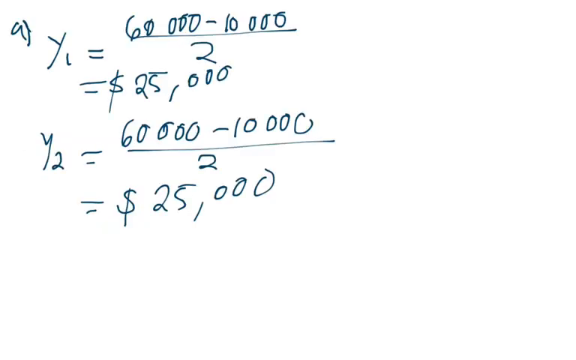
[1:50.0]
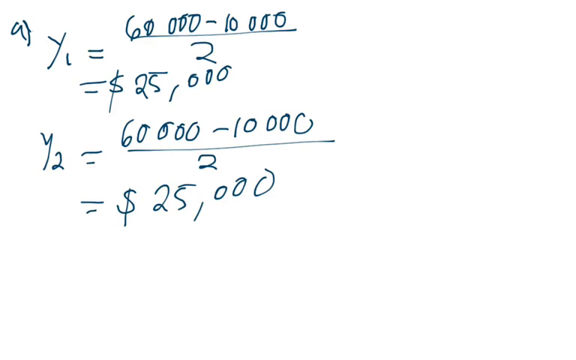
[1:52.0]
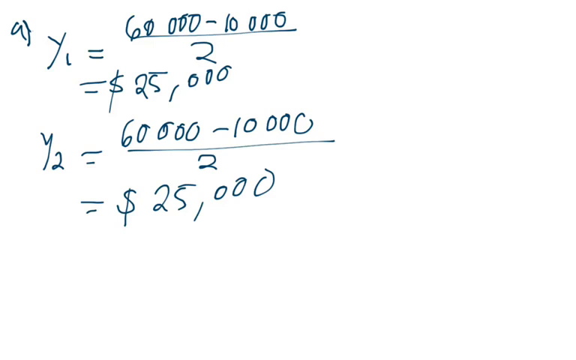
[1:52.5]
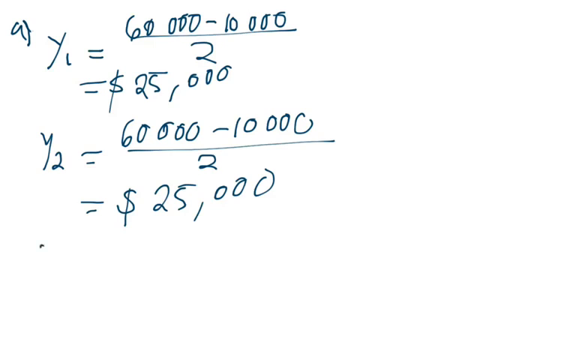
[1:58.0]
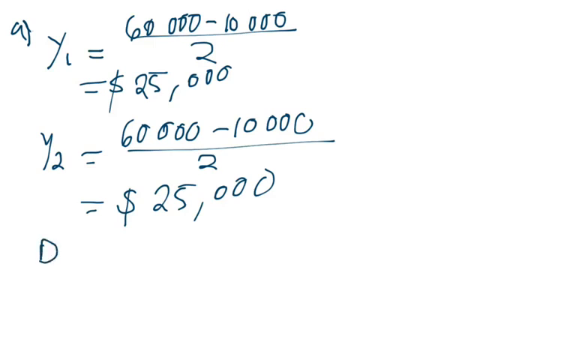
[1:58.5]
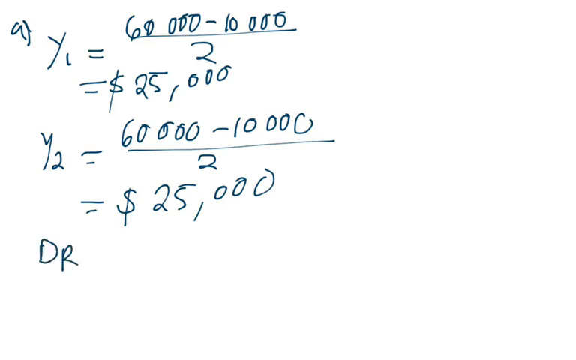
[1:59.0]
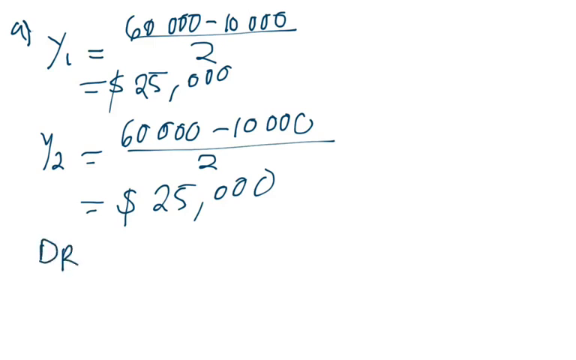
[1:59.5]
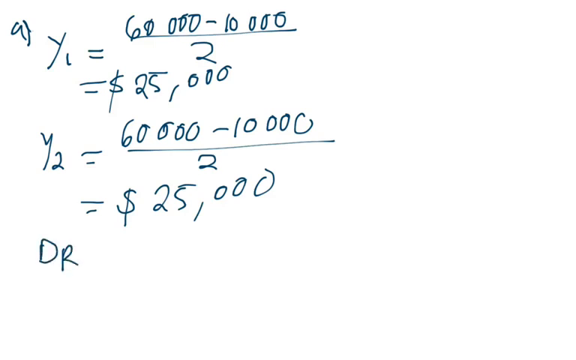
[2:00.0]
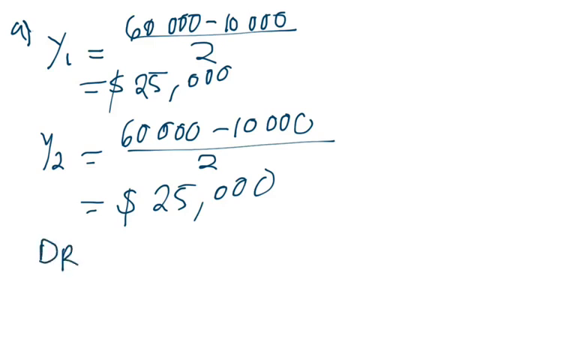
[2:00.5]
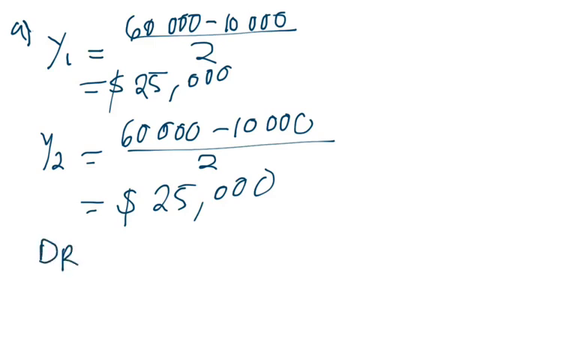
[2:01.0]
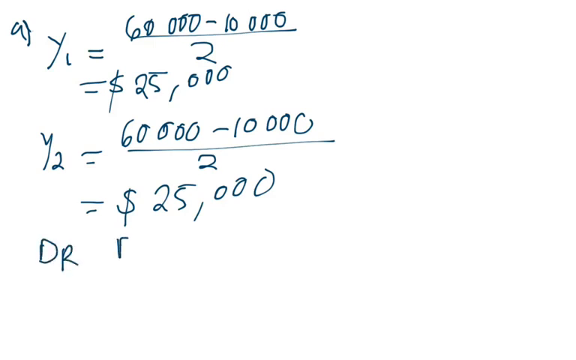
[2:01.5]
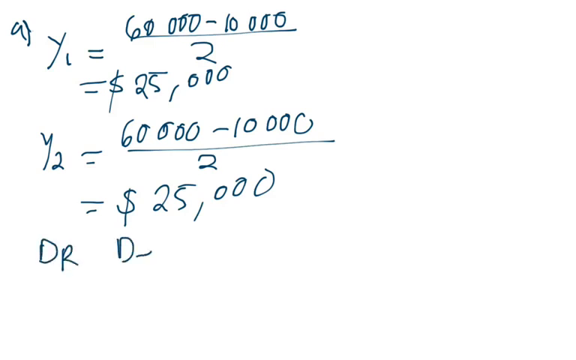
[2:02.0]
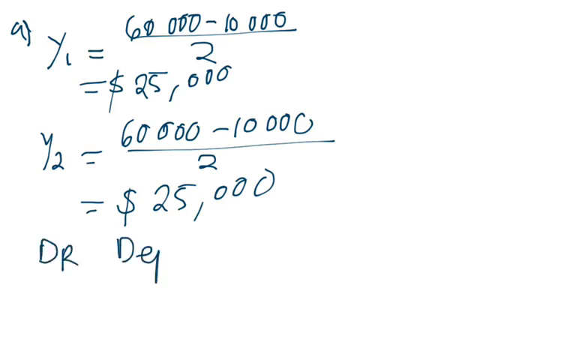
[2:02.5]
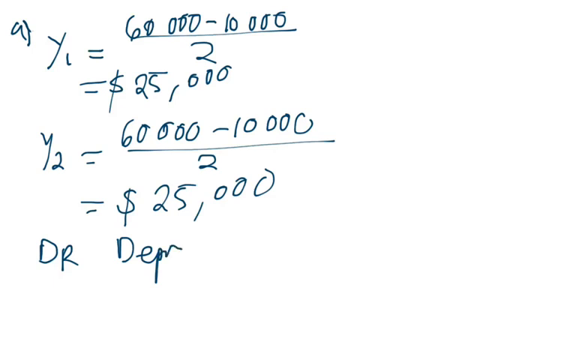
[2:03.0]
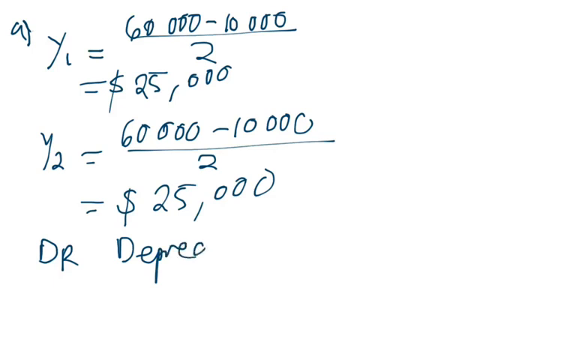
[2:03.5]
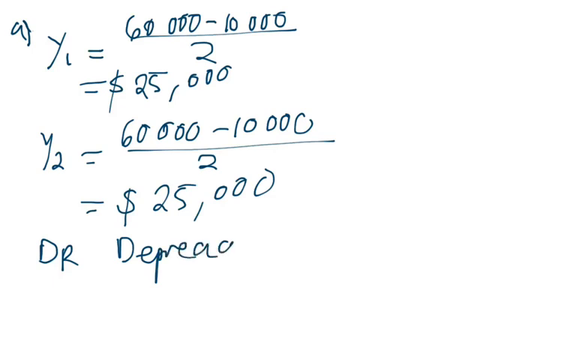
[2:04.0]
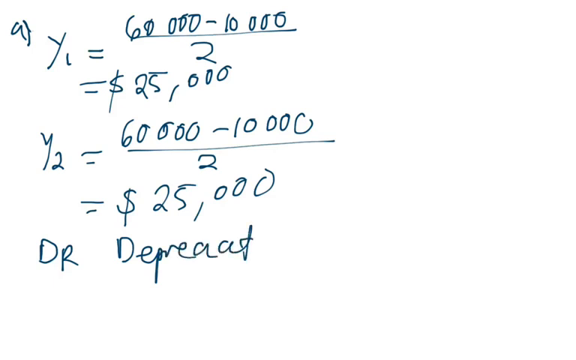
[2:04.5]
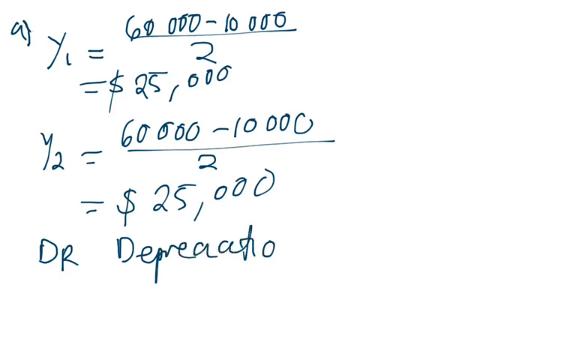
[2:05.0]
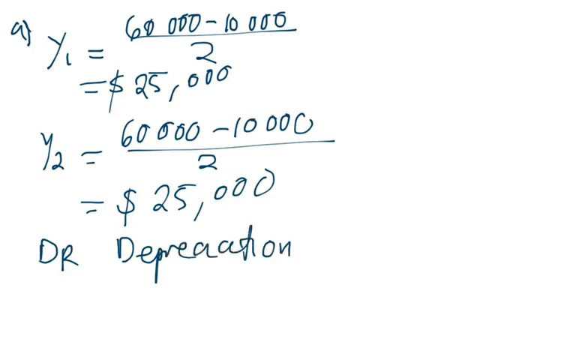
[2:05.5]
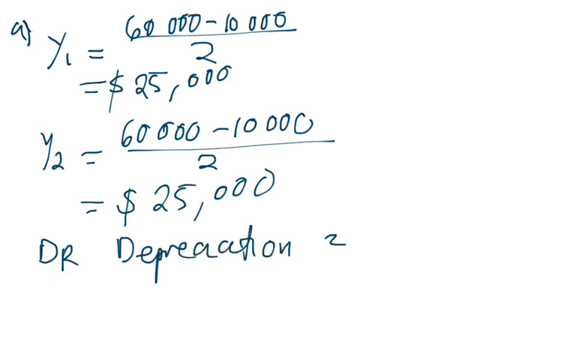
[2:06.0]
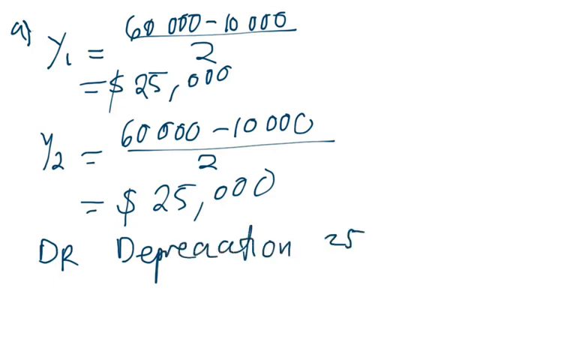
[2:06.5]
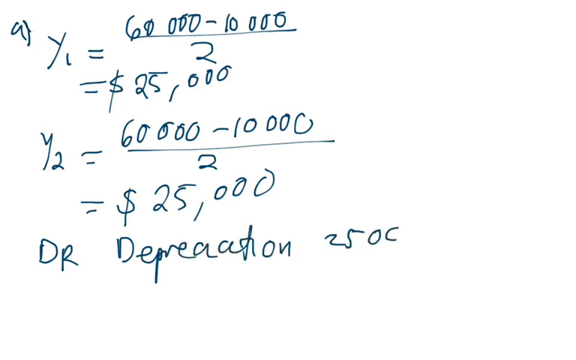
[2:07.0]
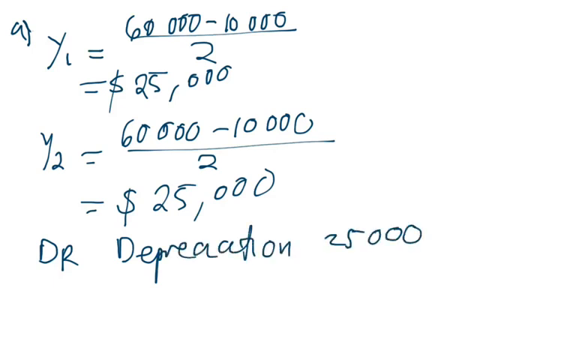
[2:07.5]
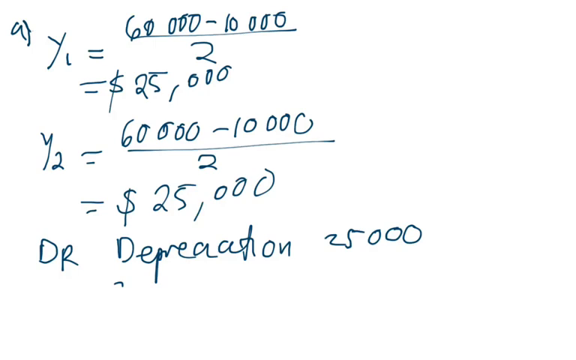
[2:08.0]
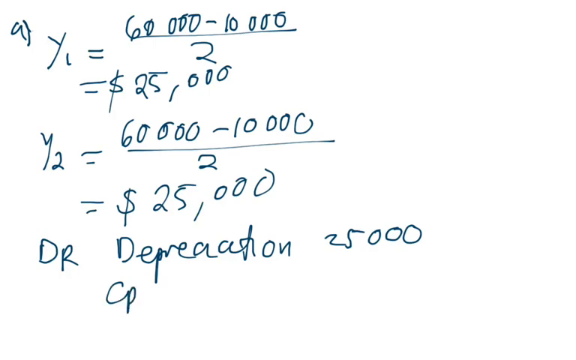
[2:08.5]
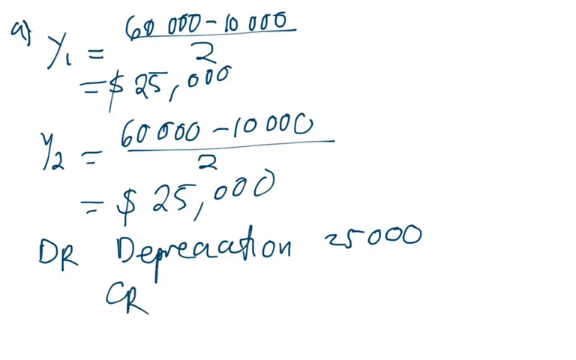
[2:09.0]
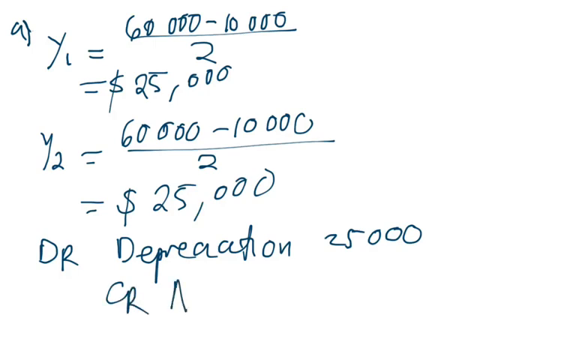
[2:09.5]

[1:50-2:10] Calculations appear on a completely white background: "A) Y1 = 60,000 - 10,000 over 2", below that "= $25,000", below that "Y2 = 60,000 - 10,000 over 2", and below that "= $25,000". All of the calculations are written in blue ink. The 1 and the 2 next to each y appear much smaller than the y. Everything after y1 and y2 is written in slowly. Words then begin to be written below the calculations, sloppily: "DR depreciation 25,000". Nothing else happens on screen. The equations seem to be related to the word problem slide.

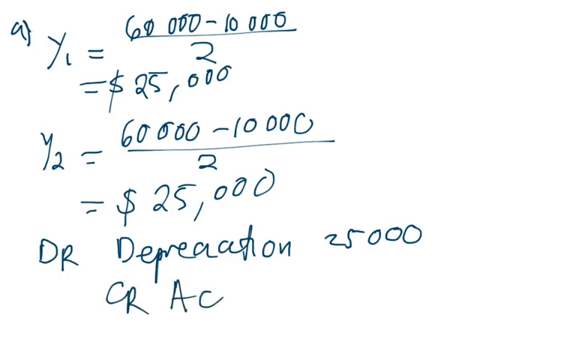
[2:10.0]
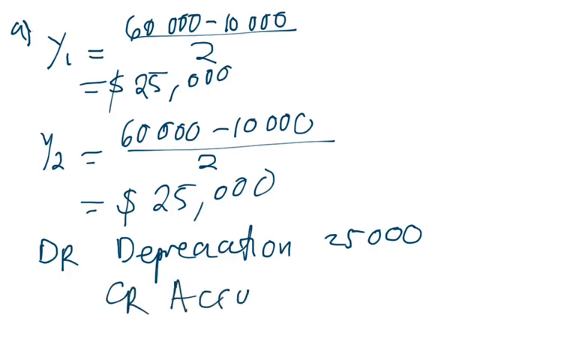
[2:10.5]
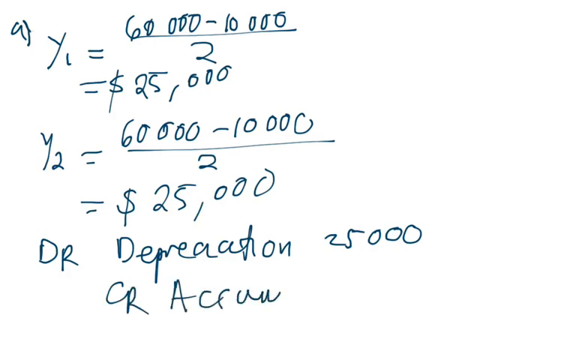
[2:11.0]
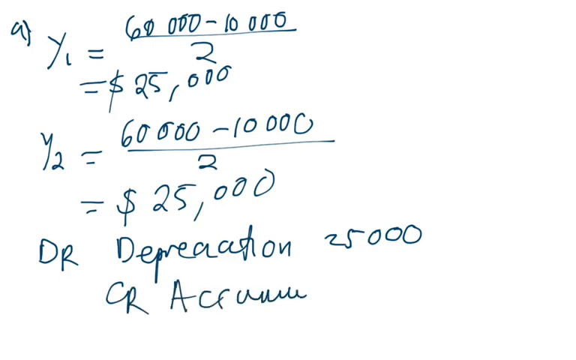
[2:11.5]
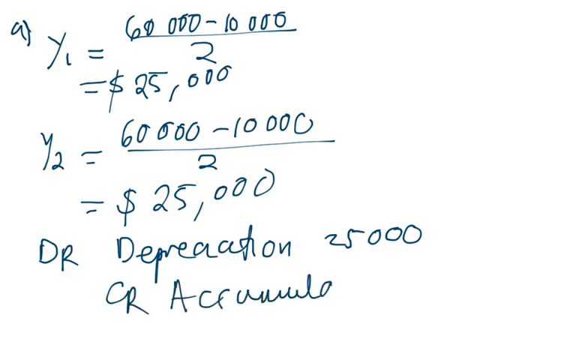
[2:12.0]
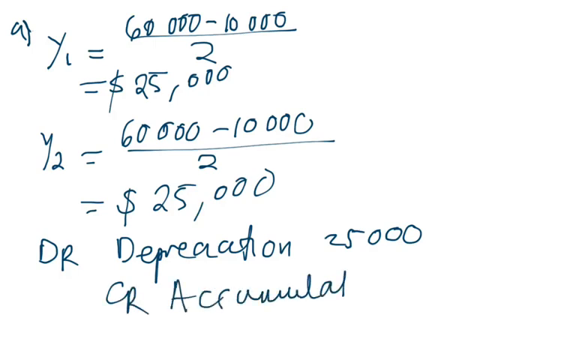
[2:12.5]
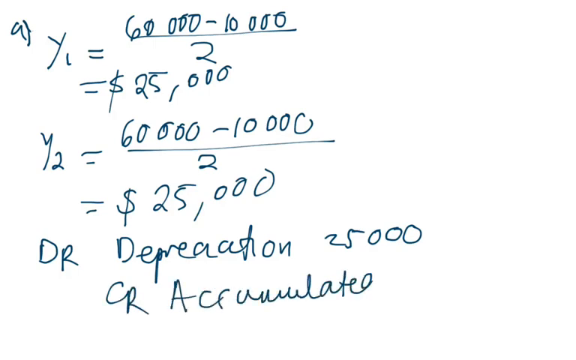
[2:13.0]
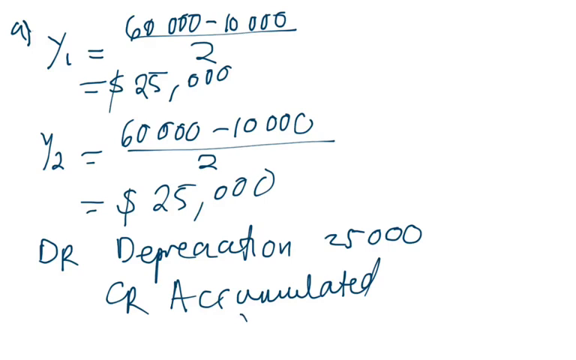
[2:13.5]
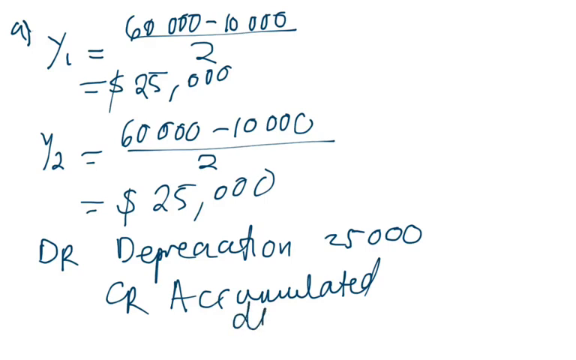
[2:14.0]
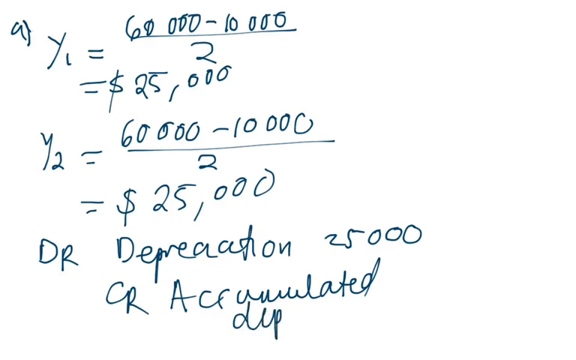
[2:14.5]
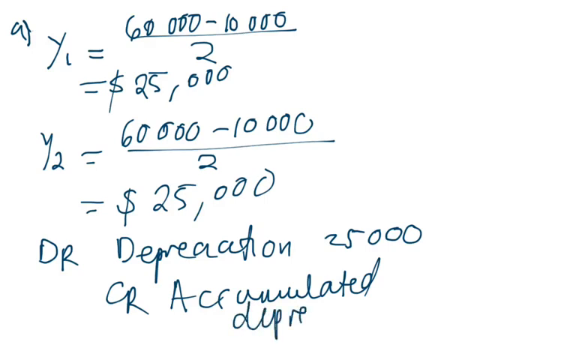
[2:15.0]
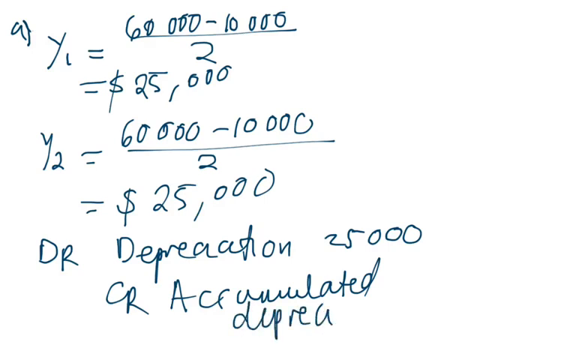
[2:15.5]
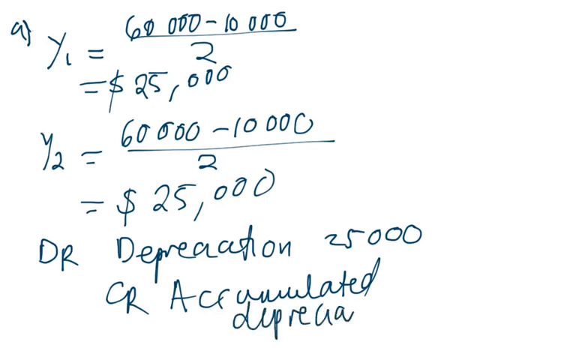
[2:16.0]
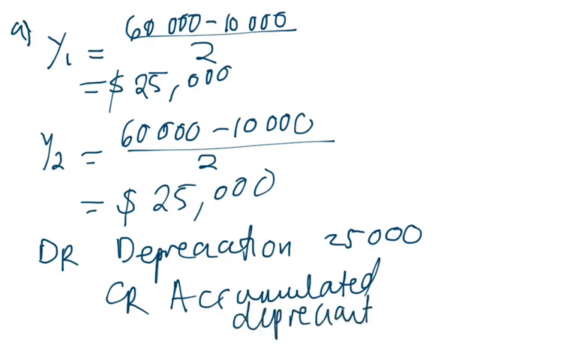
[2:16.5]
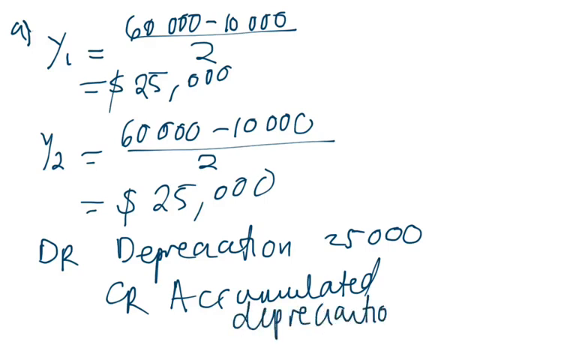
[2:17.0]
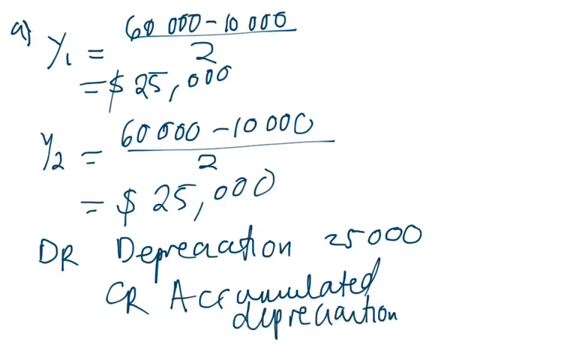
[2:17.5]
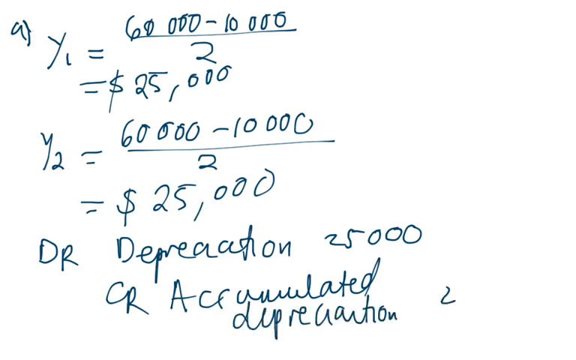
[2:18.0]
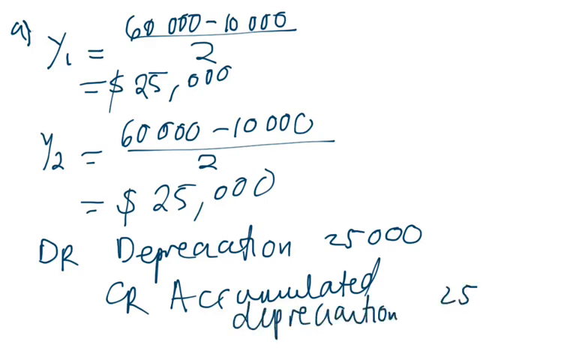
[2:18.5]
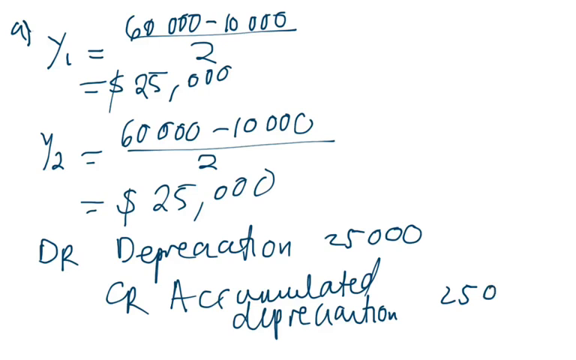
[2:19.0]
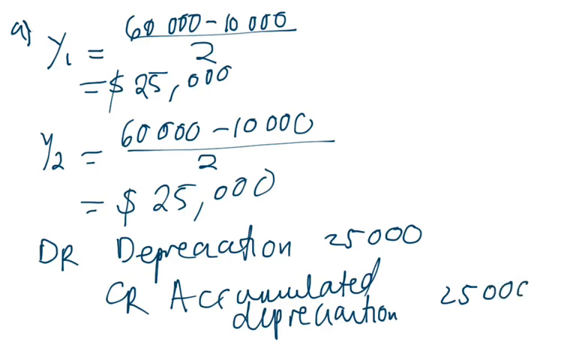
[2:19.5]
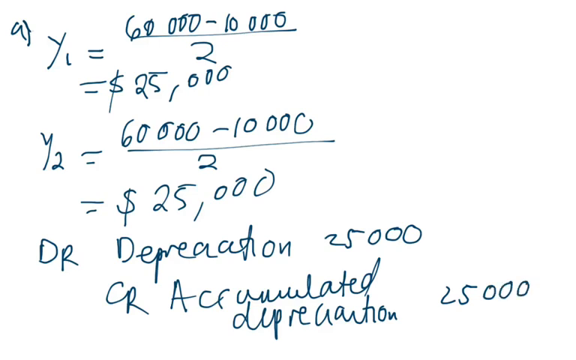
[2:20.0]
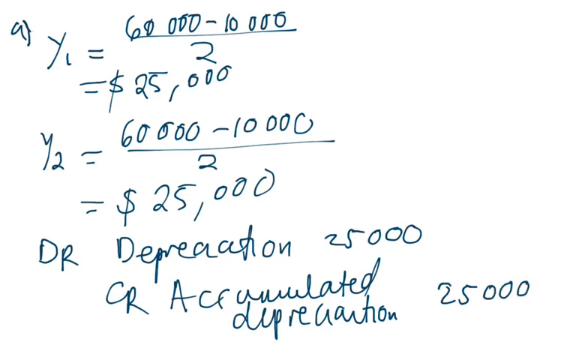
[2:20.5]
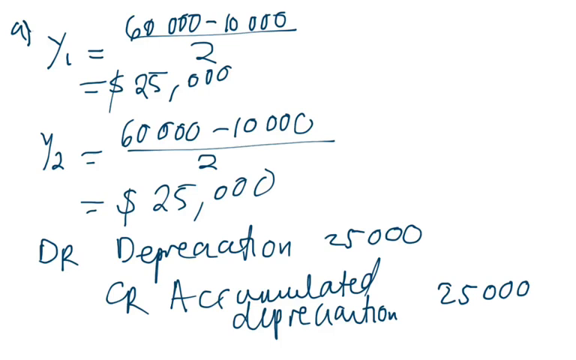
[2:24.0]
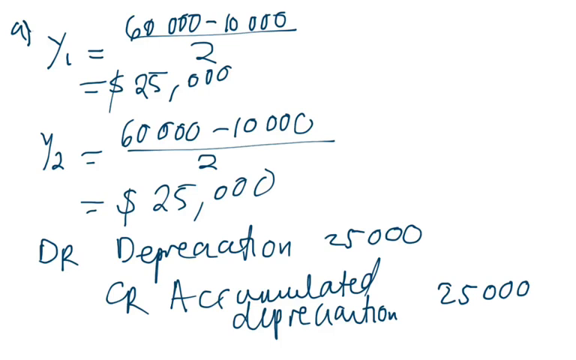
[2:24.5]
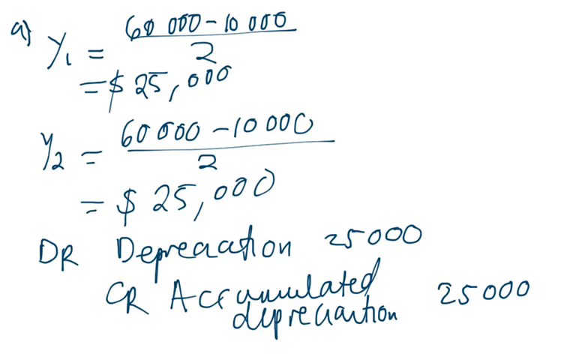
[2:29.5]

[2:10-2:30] A presentation appears to show a calculation on a completely white background that is void of anything else. From the top left it says "A)", and to the right of that is a Y with a small 1 at its bottom right, followed by an equal sign and "60,000 - 10,000", all over 2. Below that is an equal sign, a dollar sign, and "25,000". Below that is a big Y with a small 2 at its bottom right, an equal sign, and "60,000 - 10,000", all over 2. Below that is an equal sign, a dollar sign, and "25,000". Below that it says "DR depreciation", then after a small space to the right, "25,000". More letters start to appear.